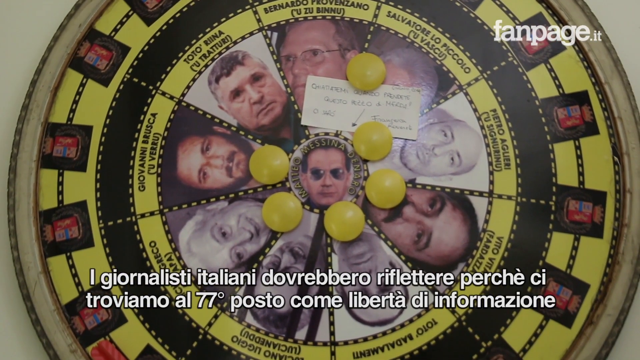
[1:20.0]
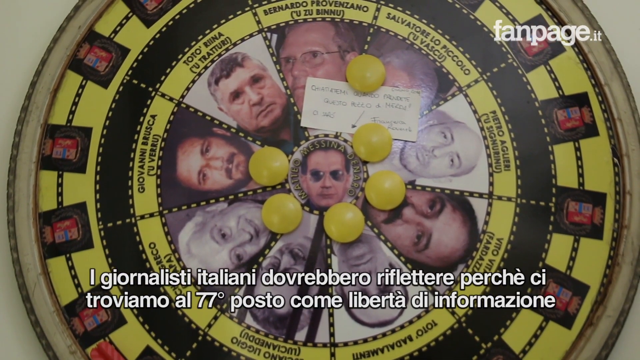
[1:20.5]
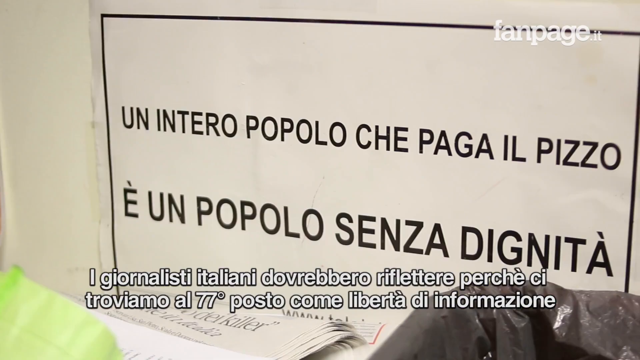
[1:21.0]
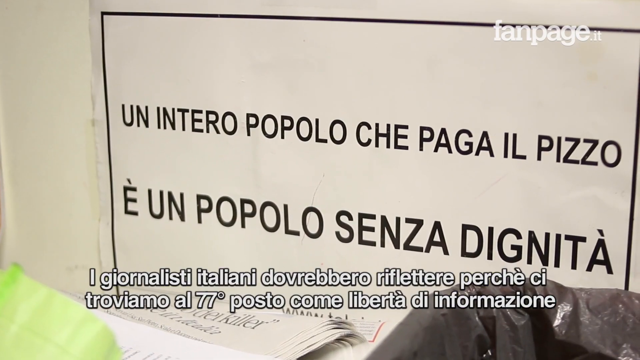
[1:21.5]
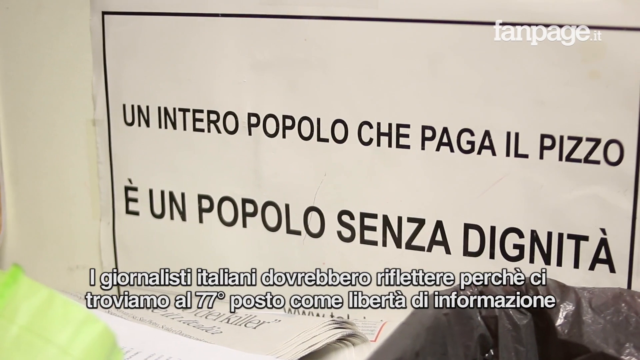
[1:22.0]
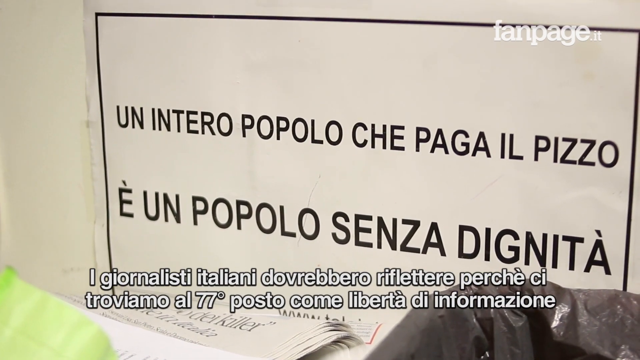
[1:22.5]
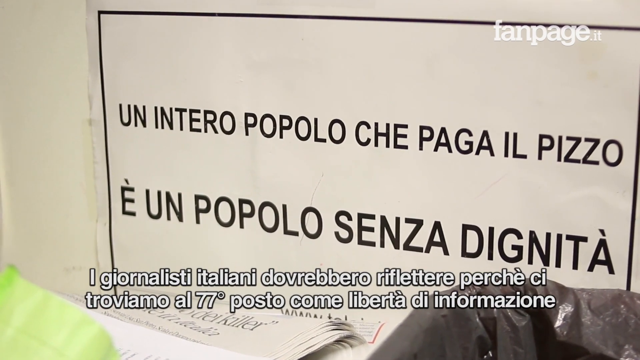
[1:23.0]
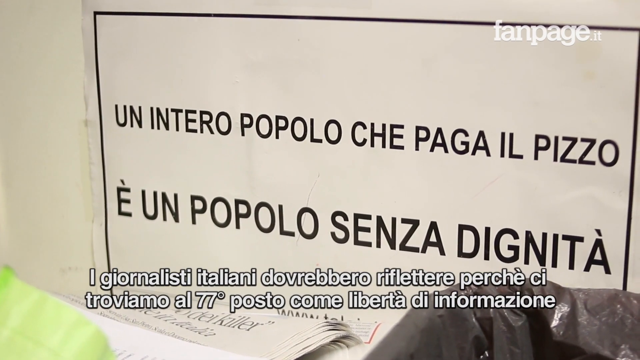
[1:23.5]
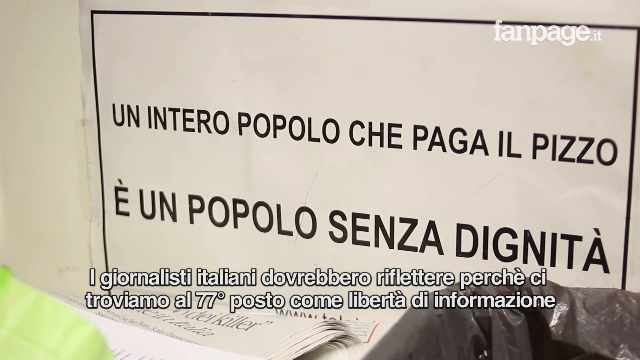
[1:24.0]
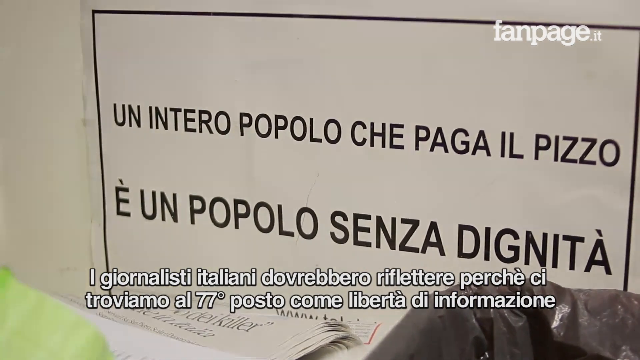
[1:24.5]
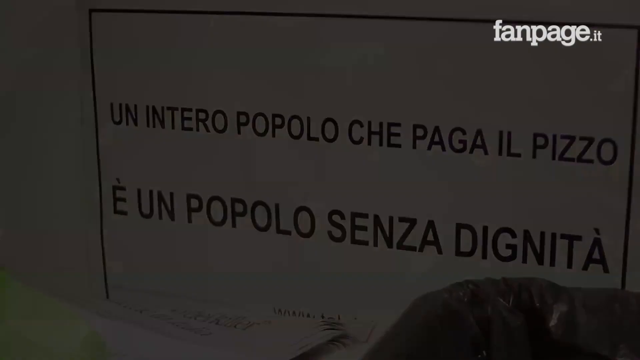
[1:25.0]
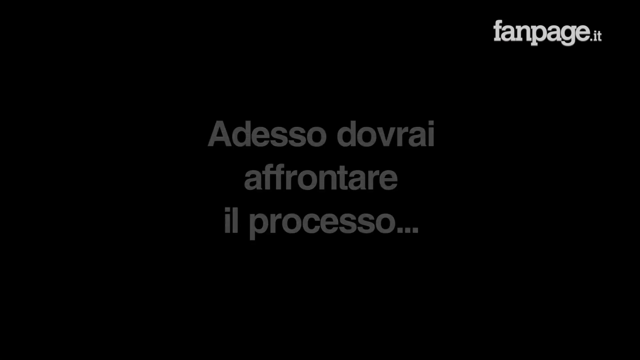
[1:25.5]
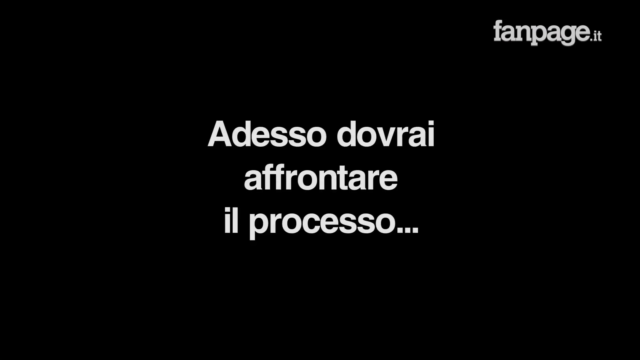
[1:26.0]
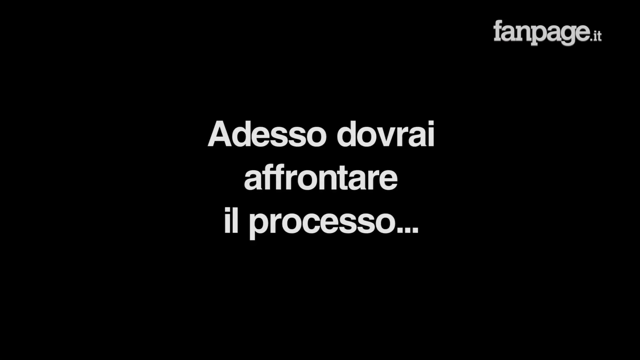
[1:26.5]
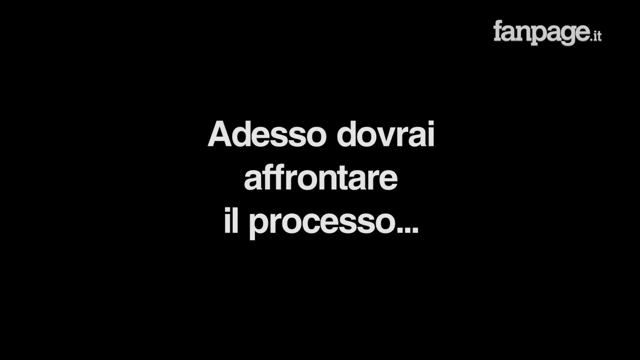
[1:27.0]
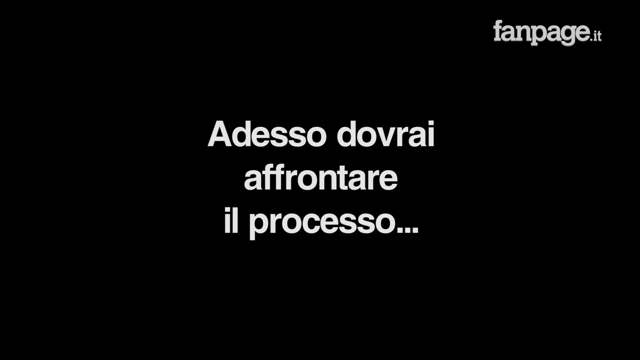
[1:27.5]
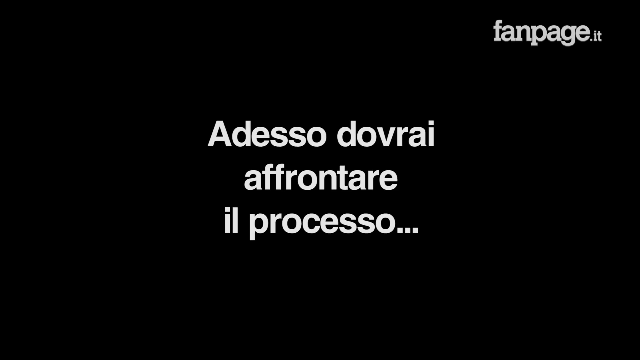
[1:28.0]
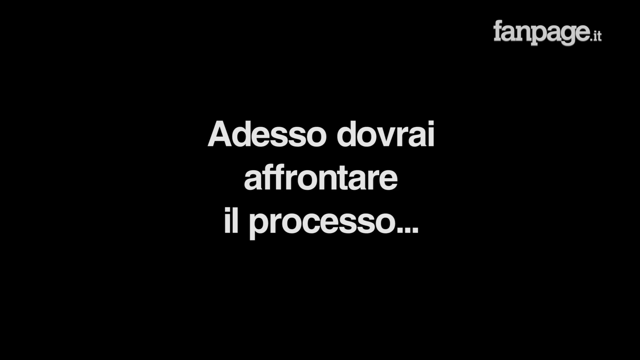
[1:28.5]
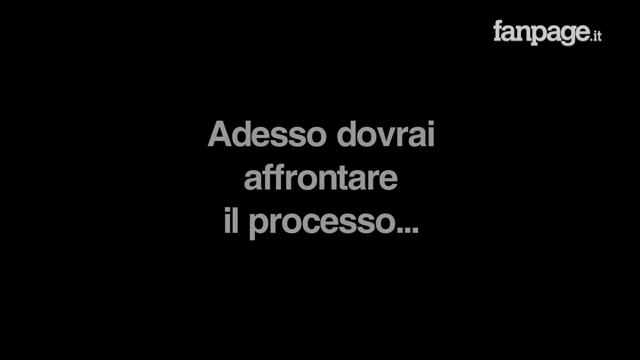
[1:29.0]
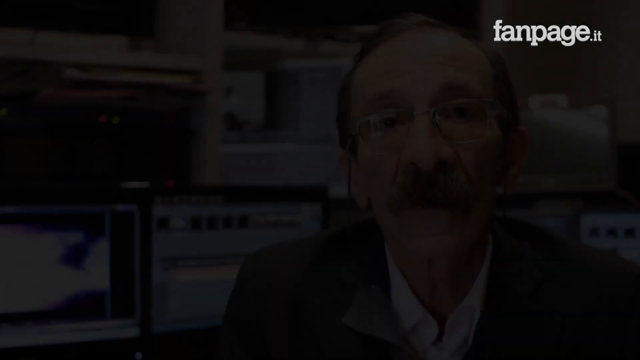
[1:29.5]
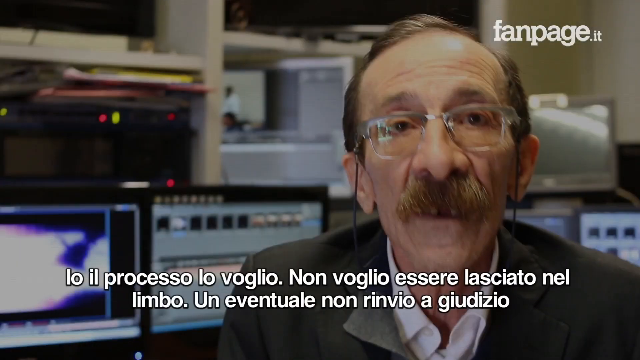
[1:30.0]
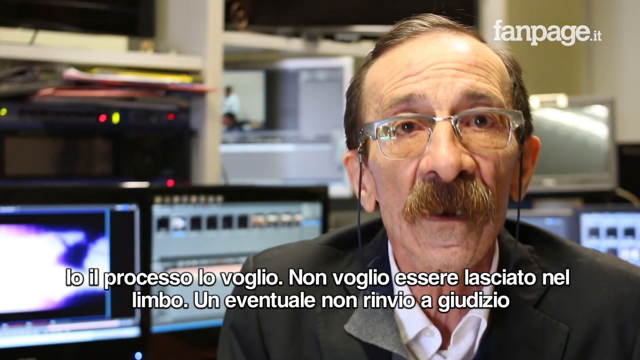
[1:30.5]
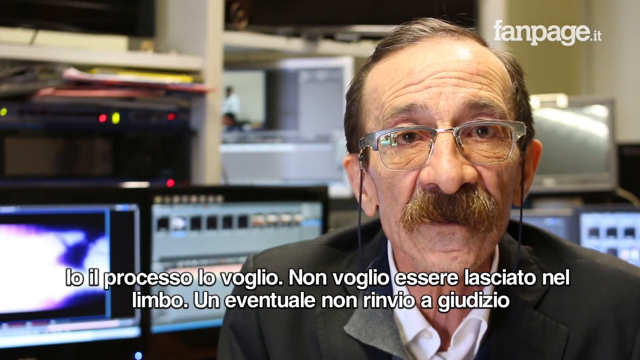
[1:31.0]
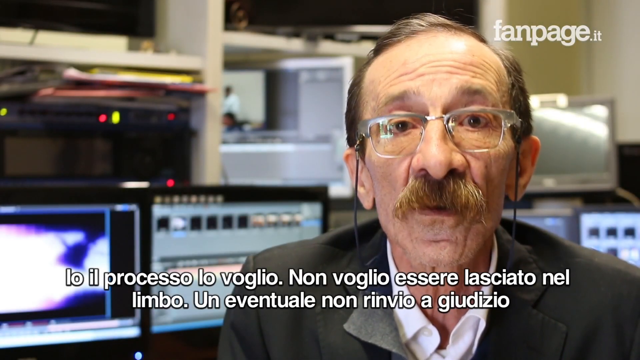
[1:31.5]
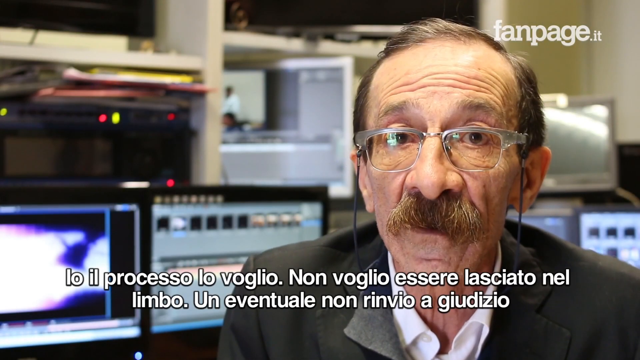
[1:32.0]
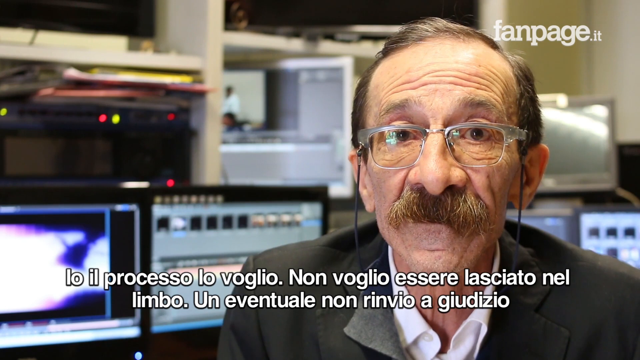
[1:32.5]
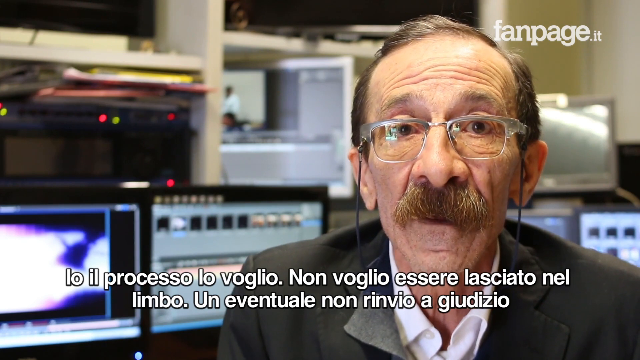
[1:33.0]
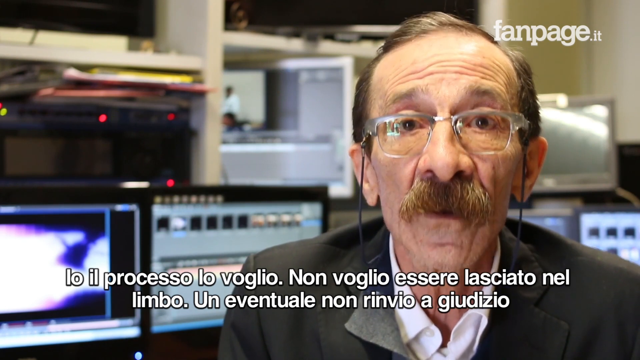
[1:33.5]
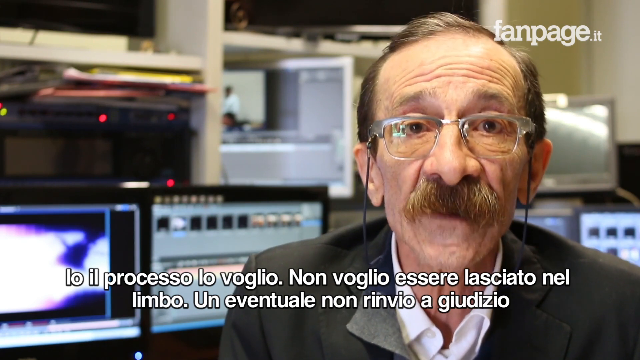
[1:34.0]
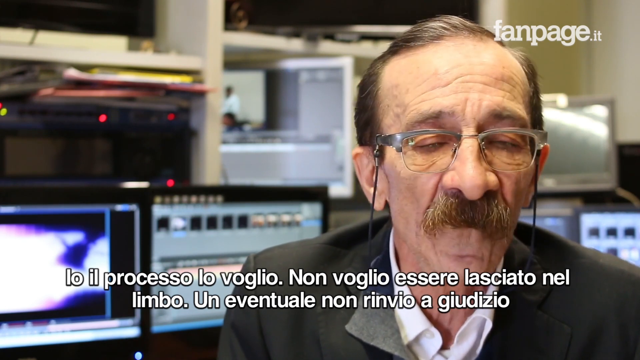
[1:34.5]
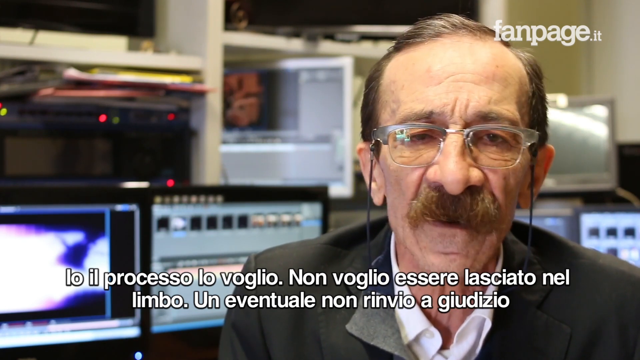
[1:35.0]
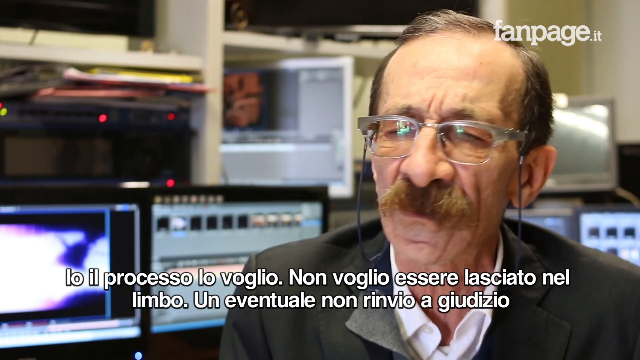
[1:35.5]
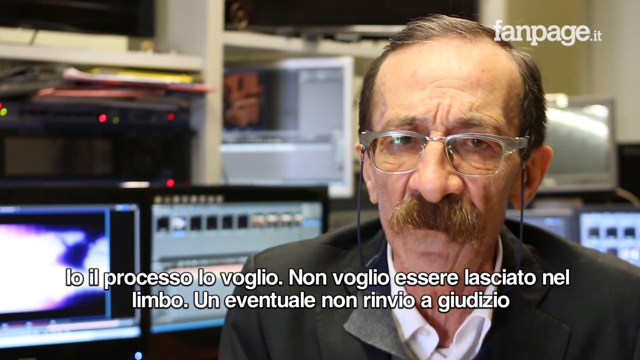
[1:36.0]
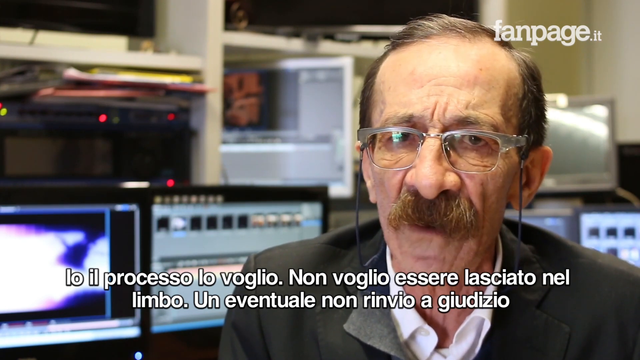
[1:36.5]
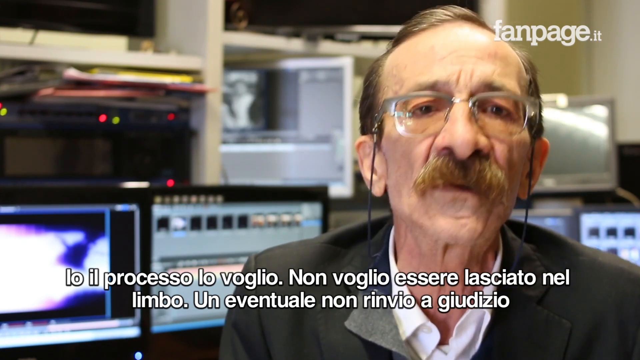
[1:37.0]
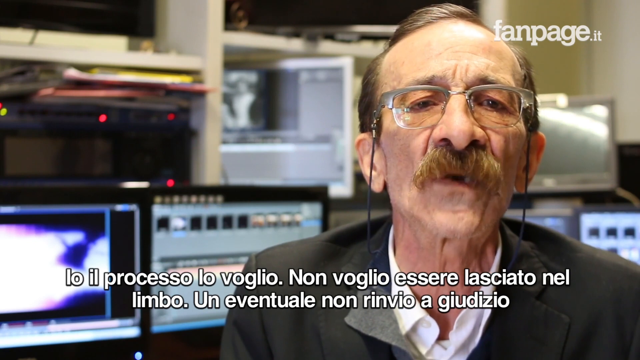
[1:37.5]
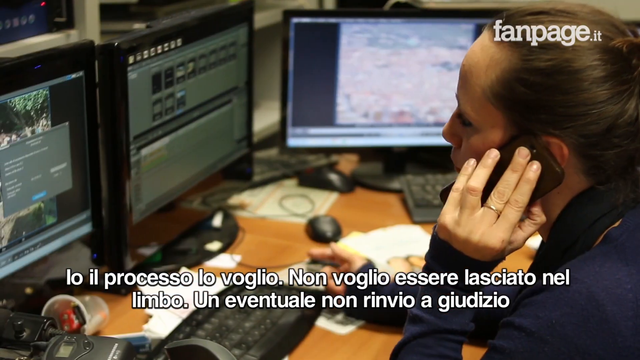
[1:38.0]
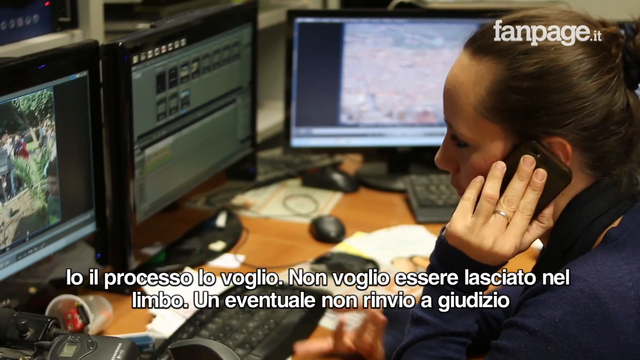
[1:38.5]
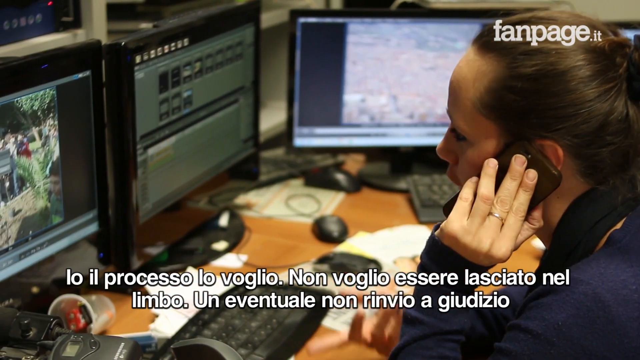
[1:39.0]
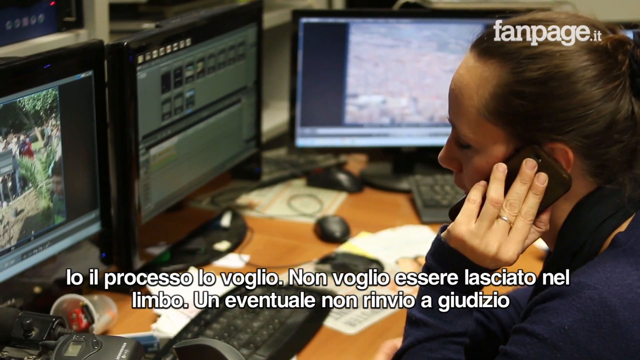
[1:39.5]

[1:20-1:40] The dartboard or target board shows one man in sunglasses in the middle on the bullseye, with photos of nine other men arranged around him. Above their photos there appear to be their names, and maybe their nicknames in brackets underneath. Six round yellow objects, maybe magnets or pins, are stuck in different positions on the board, along with one small handwritten note with writing and an arrow pointing toward the bullseye. Next there is a sign in Italian, only two sentences long. The scene fades to black and Italian text followed by an ellipsis appears on the screen. The old man with a receding hairline, glasses and a distinctive thick moustache, his face otherwise clean shaven, talks while looking directly into the camera. He moves his face quite a lot from side to side as he speaks, looks up, and stays quite focused on the camera. The next scene shows a woman holding a phone to her left ear with her left hand. She is in front of three computer screens and a desk covered in paperwork, a keyboard and other office accoutrements.